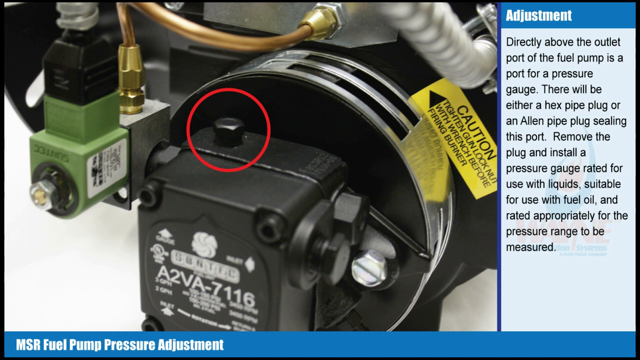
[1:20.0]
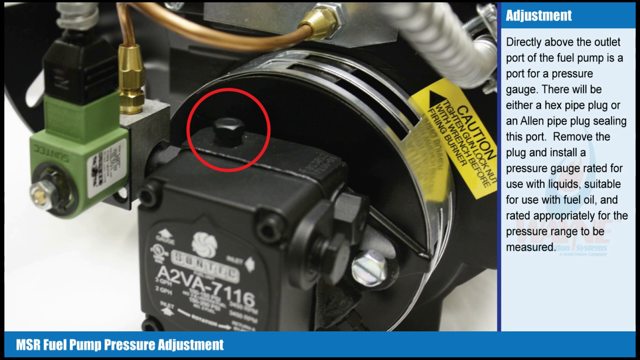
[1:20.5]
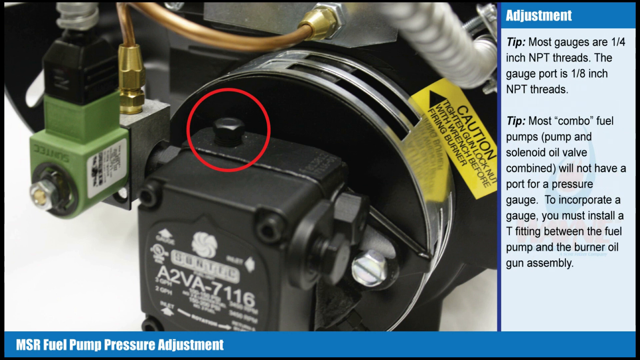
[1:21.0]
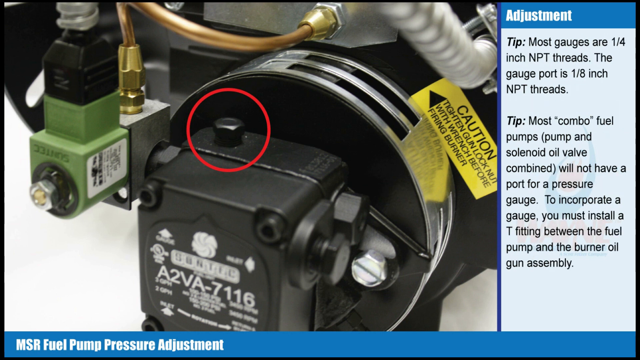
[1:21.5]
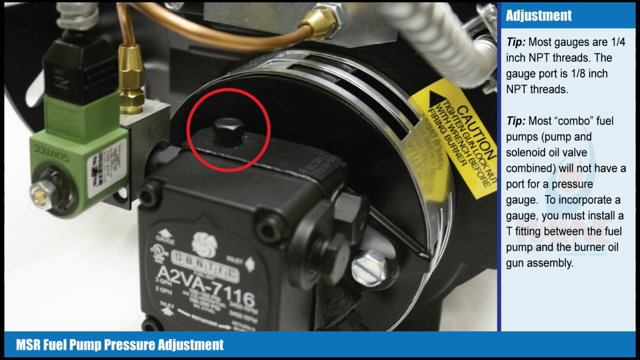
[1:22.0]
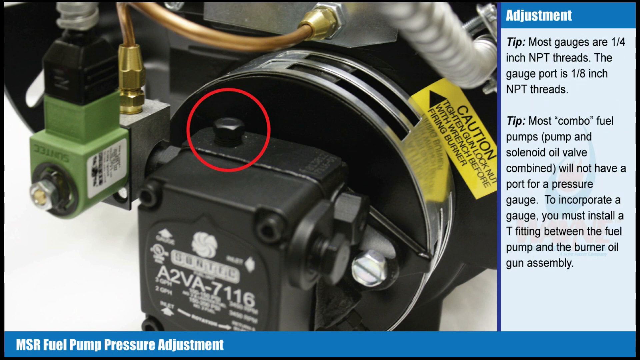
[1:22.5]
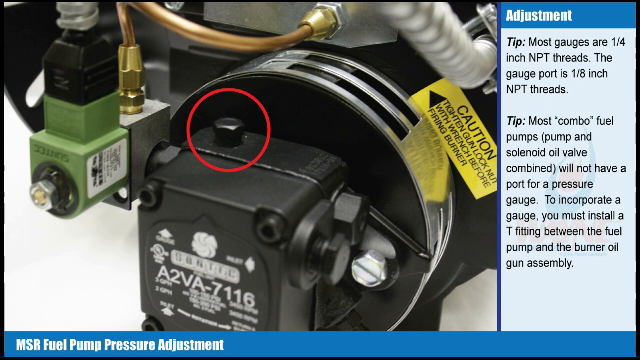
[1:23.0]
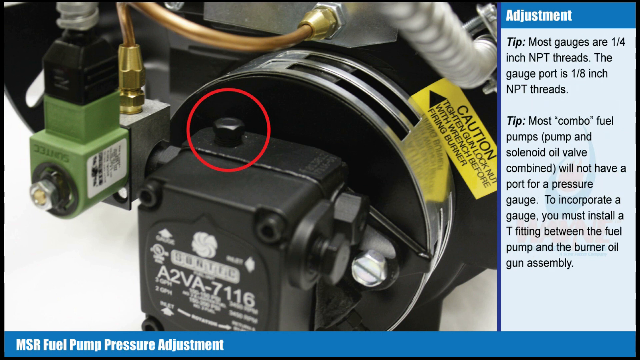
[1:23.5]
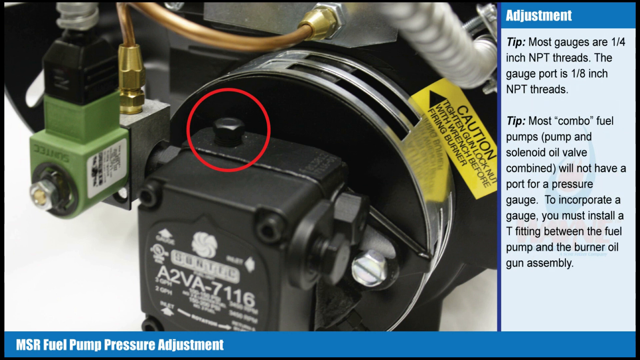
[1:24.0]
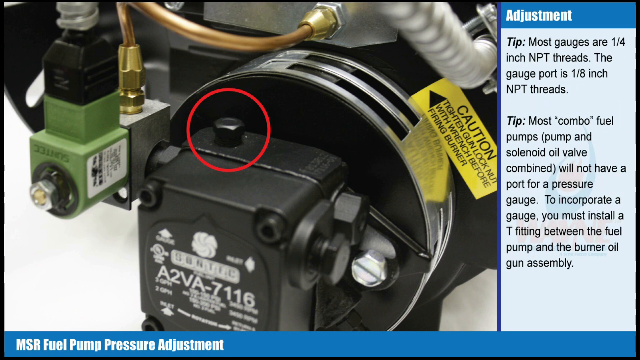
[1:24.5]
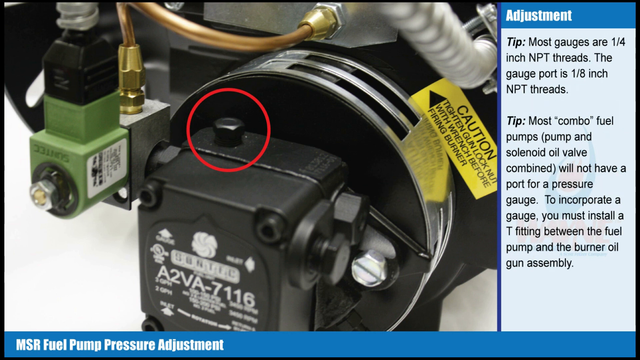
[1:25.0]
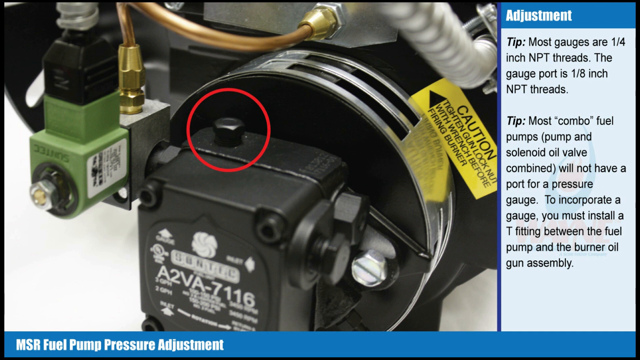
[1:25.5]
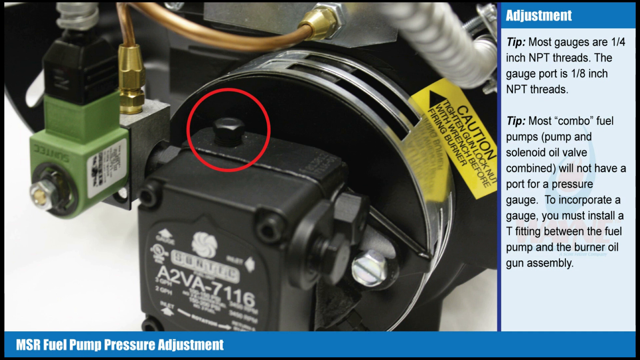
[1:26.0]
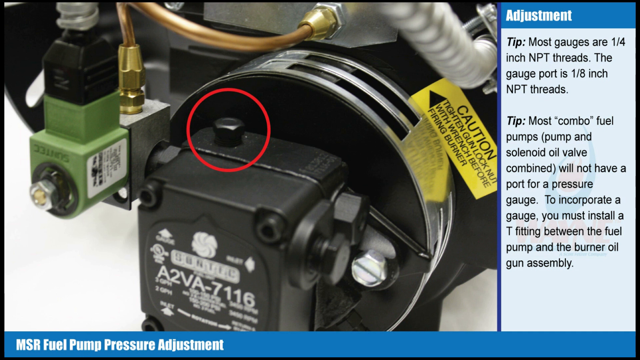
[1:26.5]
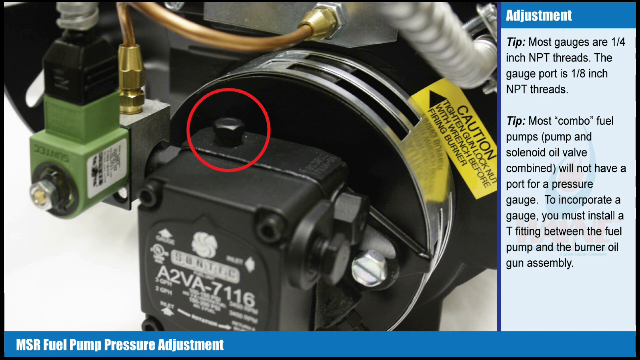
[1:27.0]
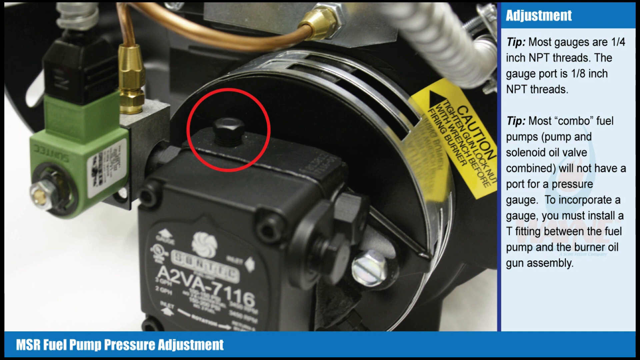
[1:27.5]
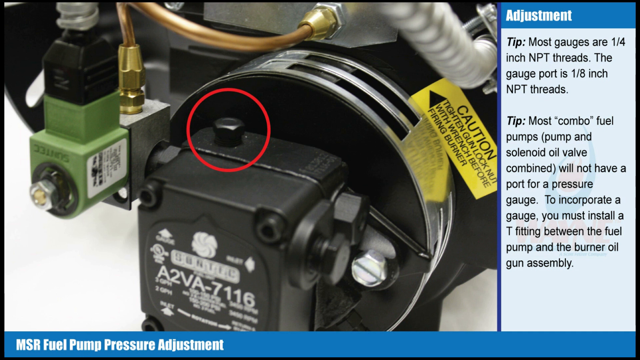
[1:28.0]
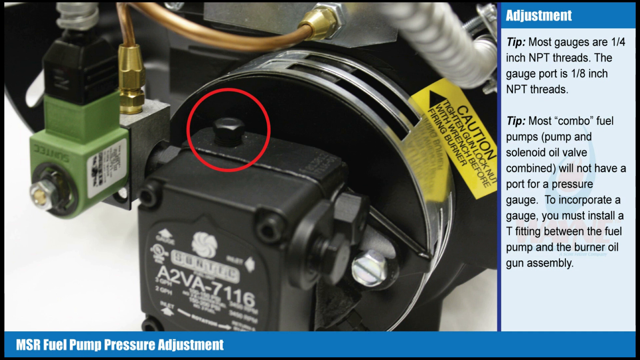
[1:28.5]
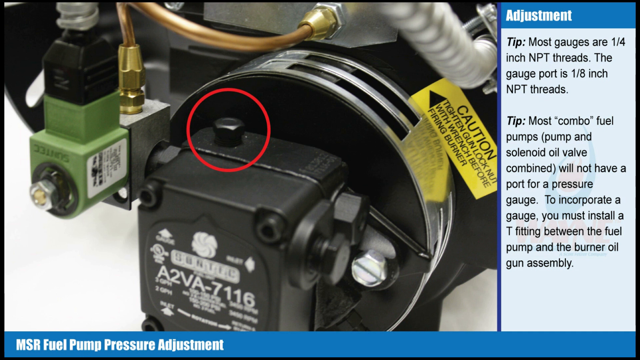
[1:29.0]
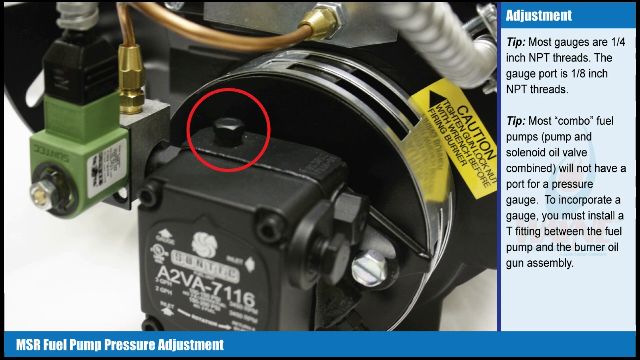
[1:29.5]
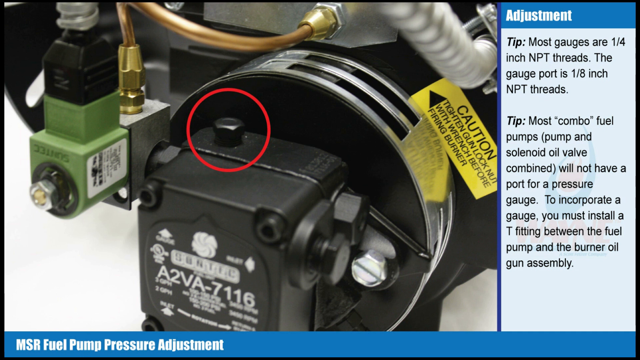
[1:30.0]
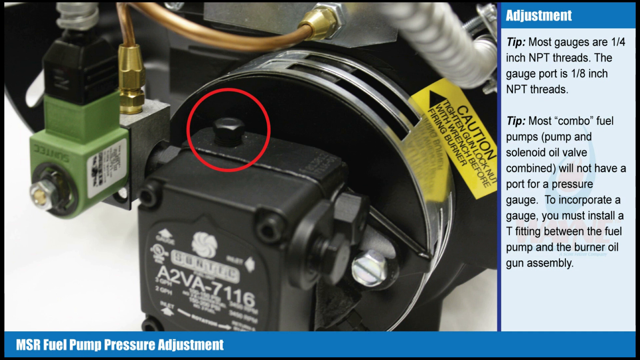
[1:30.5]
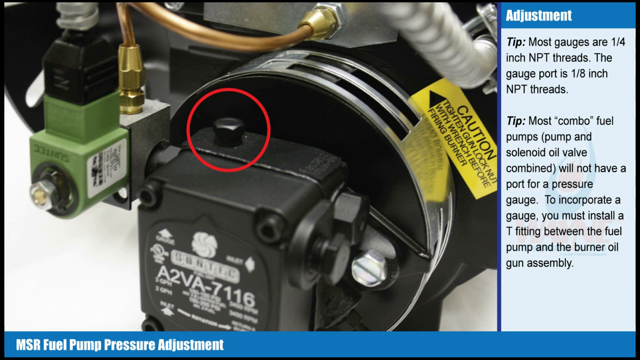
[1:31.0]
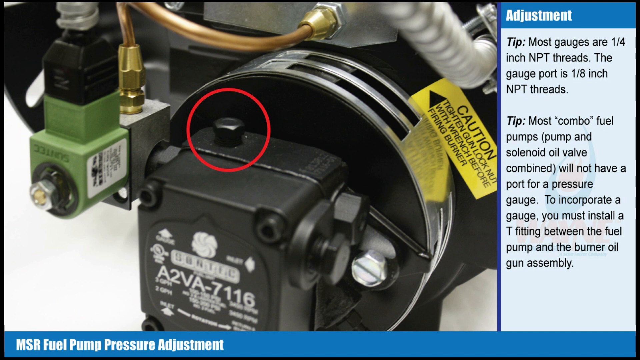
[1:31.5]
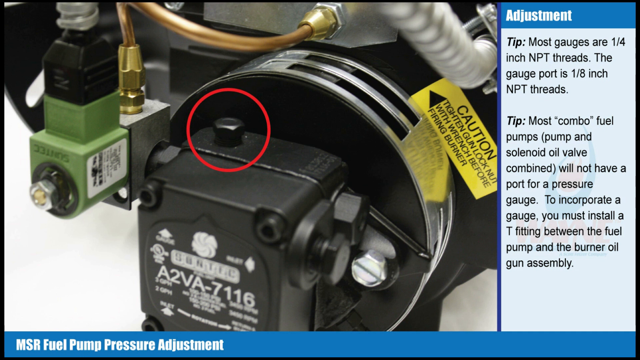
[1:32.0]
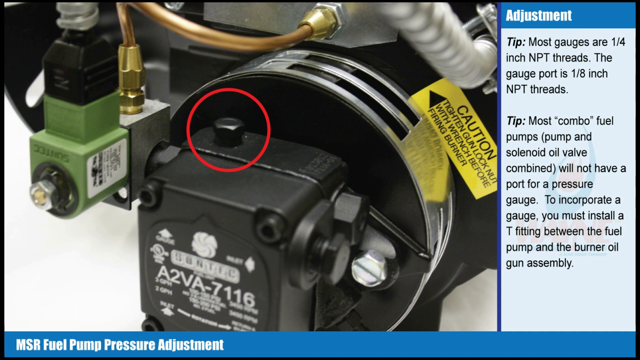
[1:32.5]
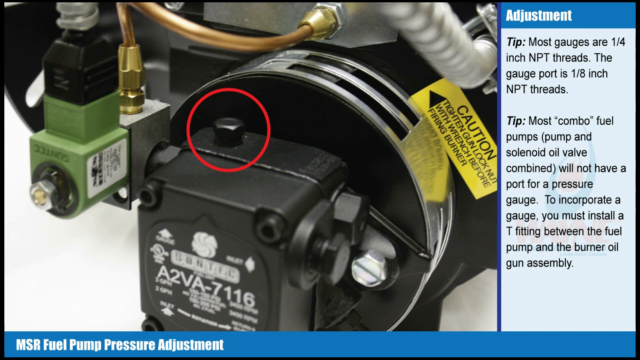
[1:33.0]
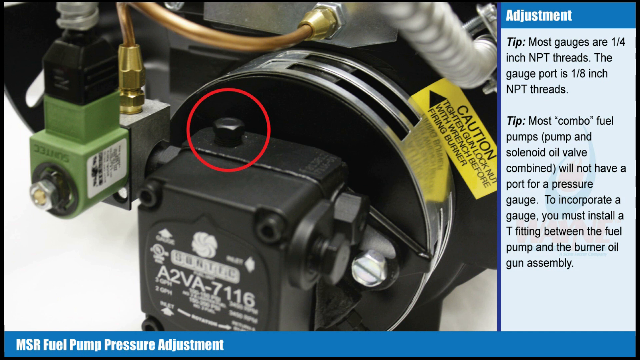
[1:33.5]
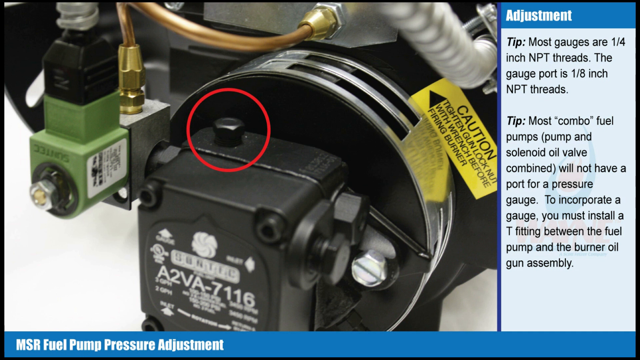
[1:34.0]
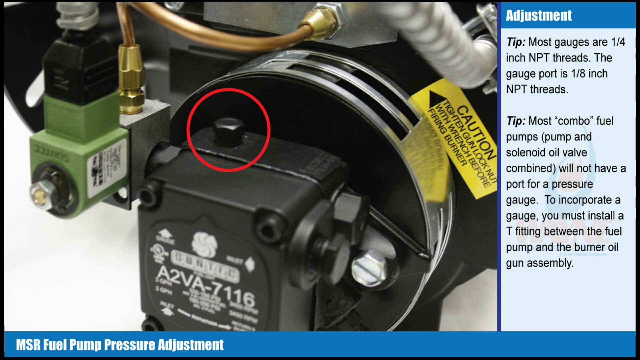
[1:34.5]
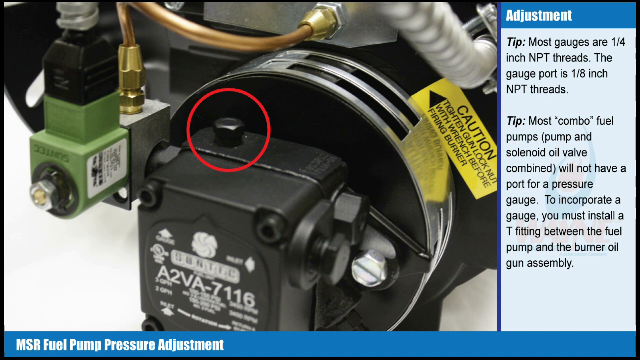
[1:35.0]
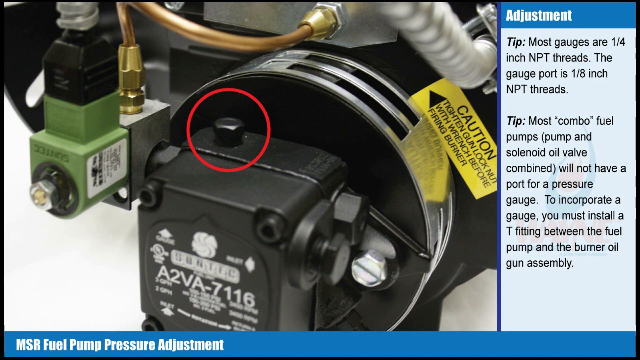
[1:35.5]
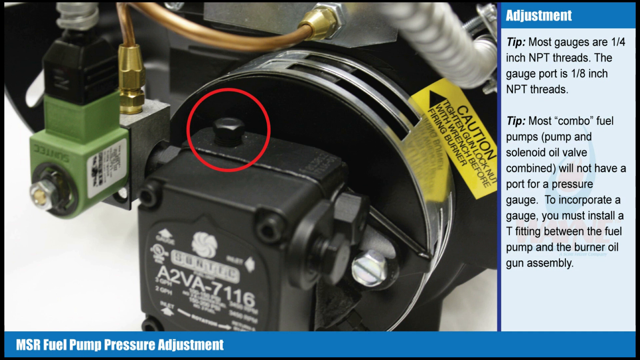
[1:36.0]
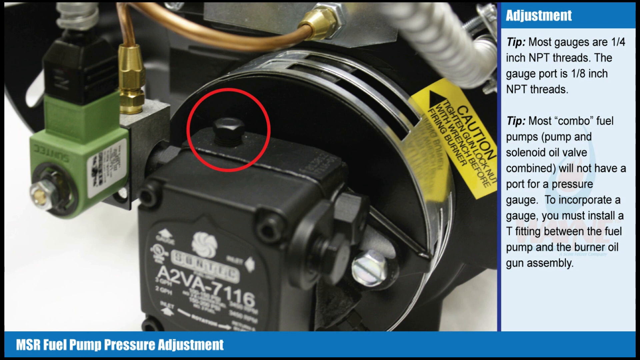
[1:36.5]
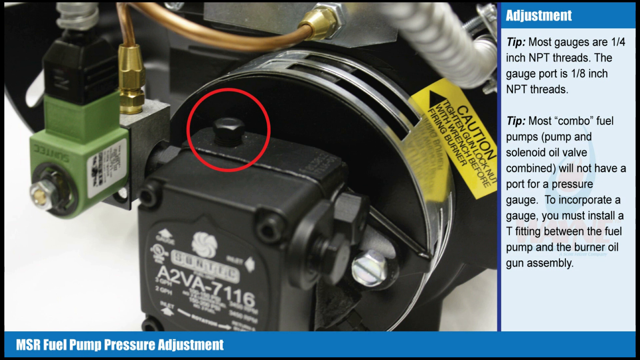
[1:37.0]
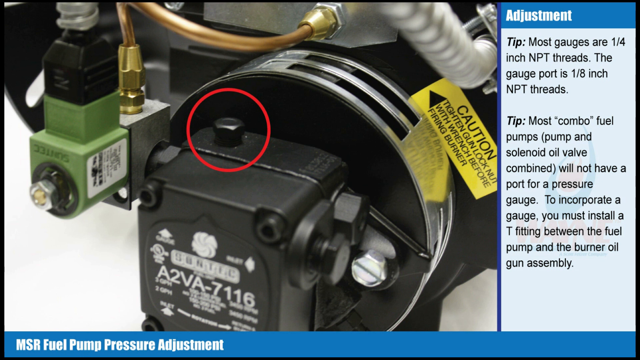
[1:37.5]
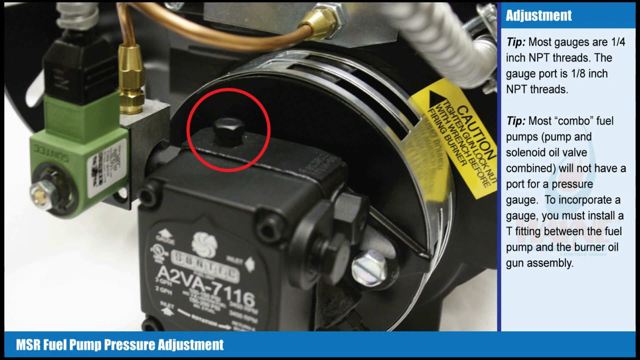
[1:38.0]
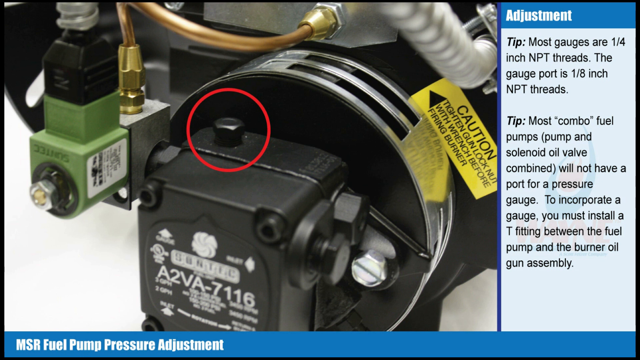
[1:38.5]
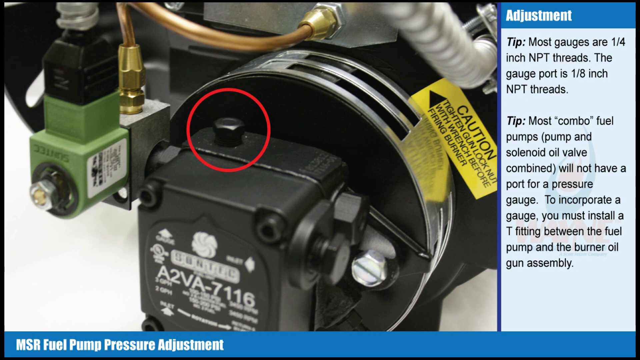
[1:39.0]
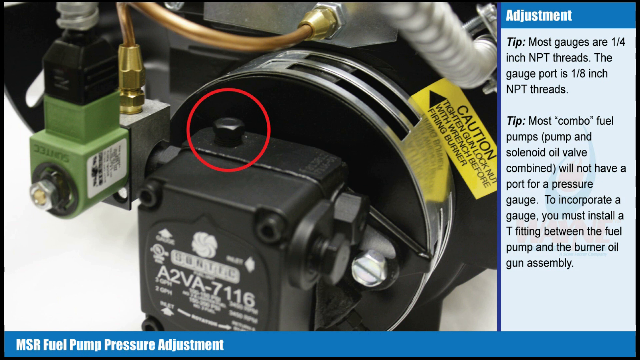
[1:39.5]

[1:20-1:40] The front view of the fuel pump continues, with the gauge at the top highlighted in the red circle. The text on the right changes, with "tip" highlighted in black, and reads "Most gauges are one-fourth inch NPT threads. The gauge port is one-eighth inch NPT threads." Below that, "tip" is highlighted in black again, with text beginning "most combo fuel pumps" and stating that they "will not have a port for a pressure gauge. To incorporate a gauge, you must install a T-fitting between the fuel pump and the burner oil gun assembly." This tip stays on screen for the remainder of the shot. At the bottom of the screen, a blue banner with white text reads "MSR Fuel Pump Pressure Adjustment."